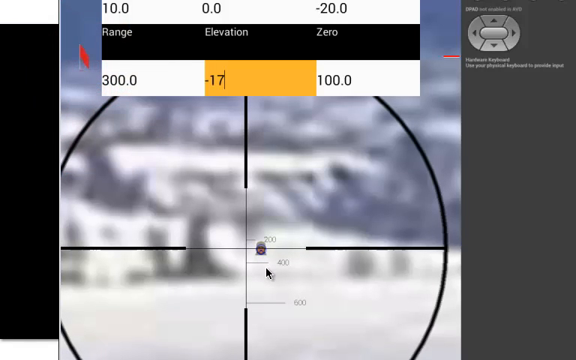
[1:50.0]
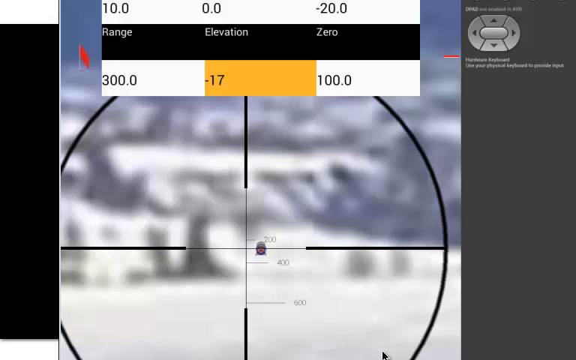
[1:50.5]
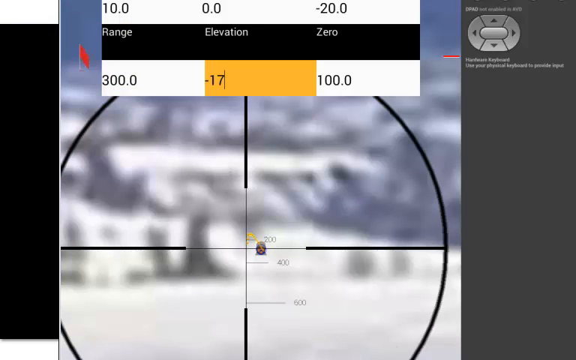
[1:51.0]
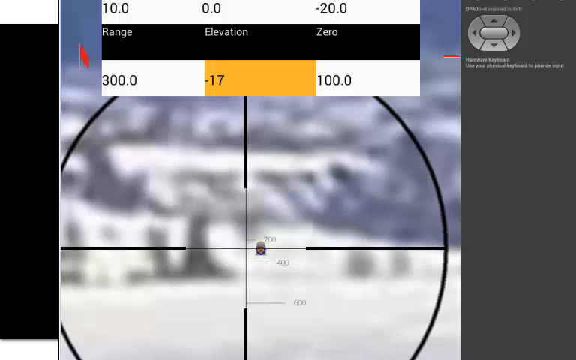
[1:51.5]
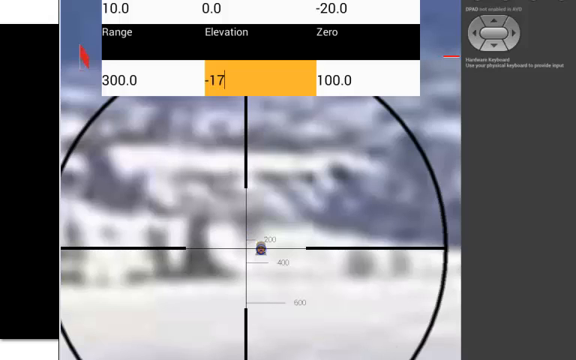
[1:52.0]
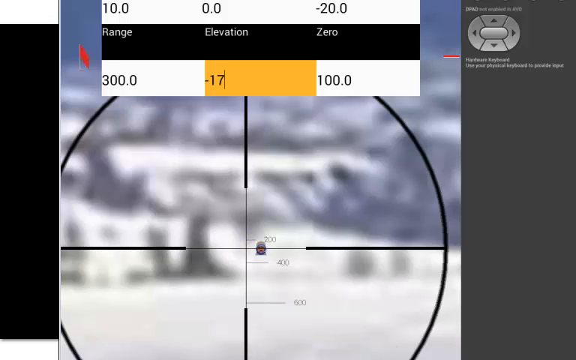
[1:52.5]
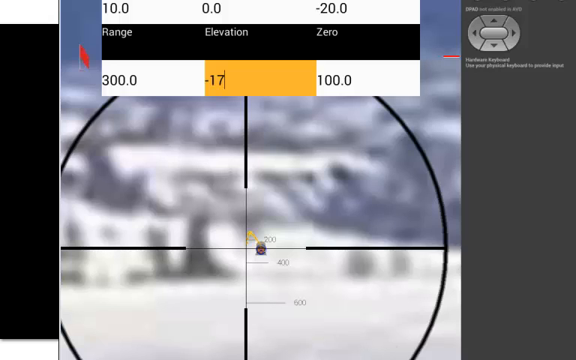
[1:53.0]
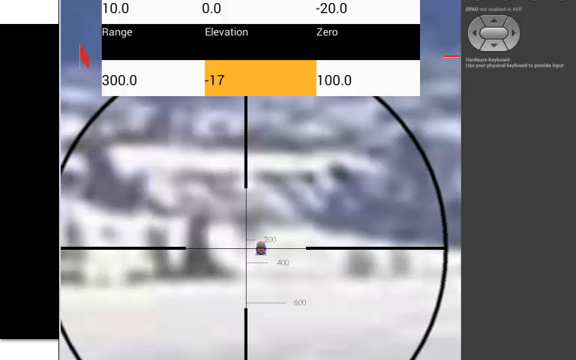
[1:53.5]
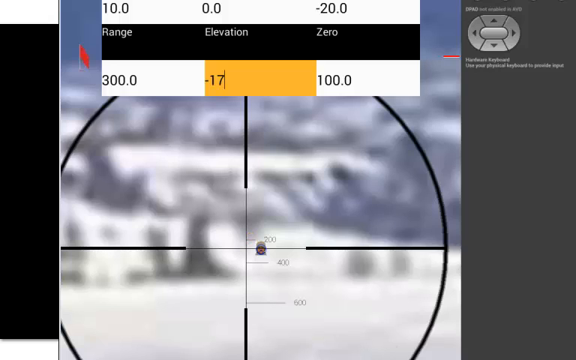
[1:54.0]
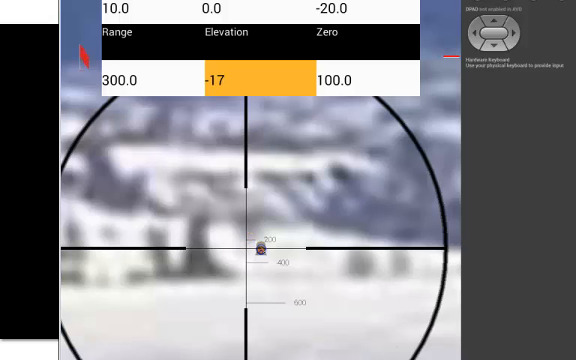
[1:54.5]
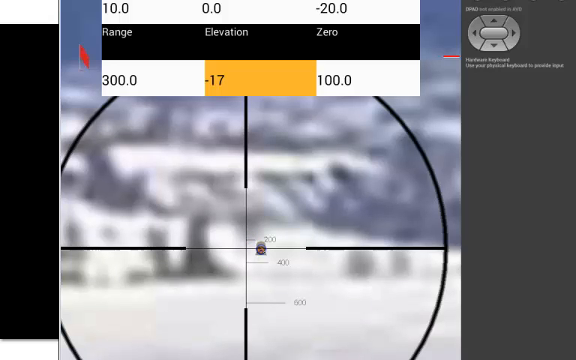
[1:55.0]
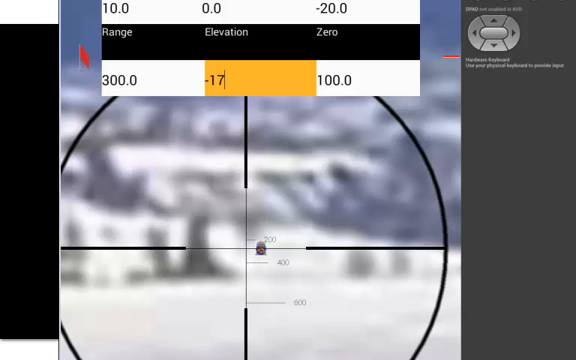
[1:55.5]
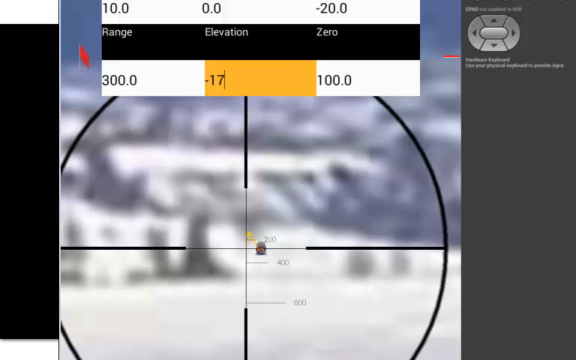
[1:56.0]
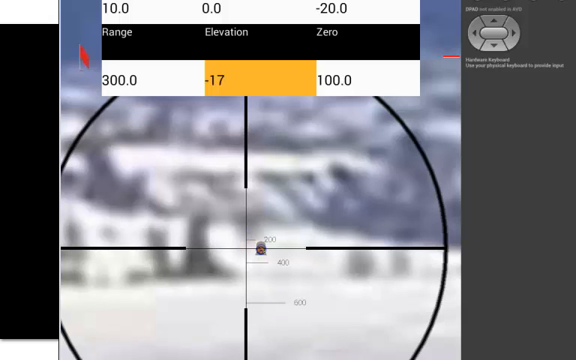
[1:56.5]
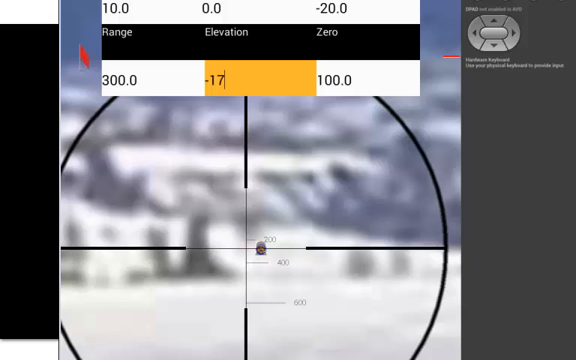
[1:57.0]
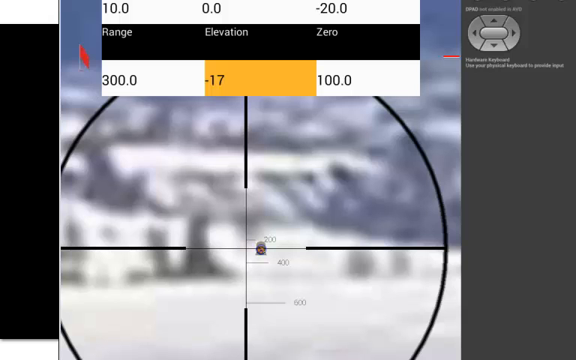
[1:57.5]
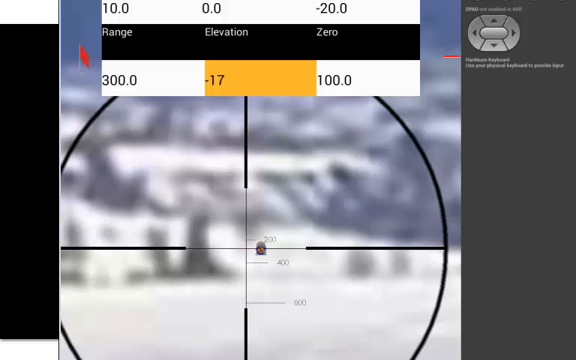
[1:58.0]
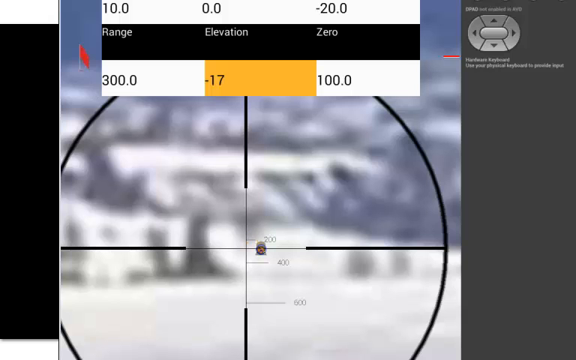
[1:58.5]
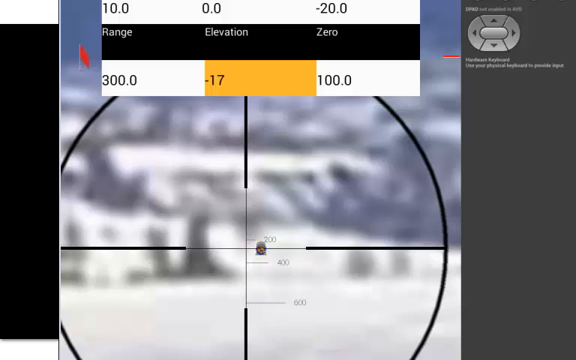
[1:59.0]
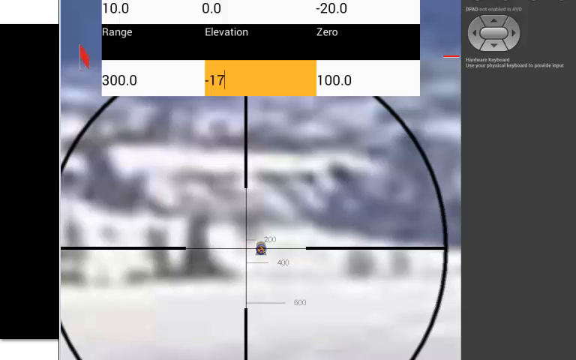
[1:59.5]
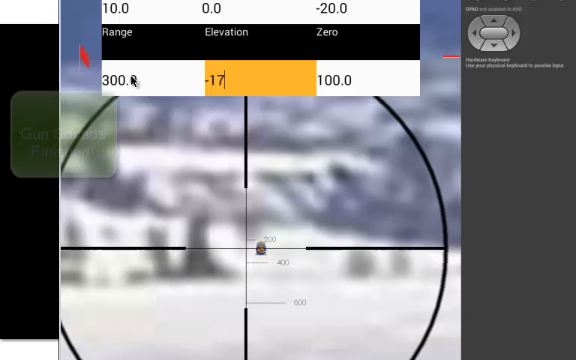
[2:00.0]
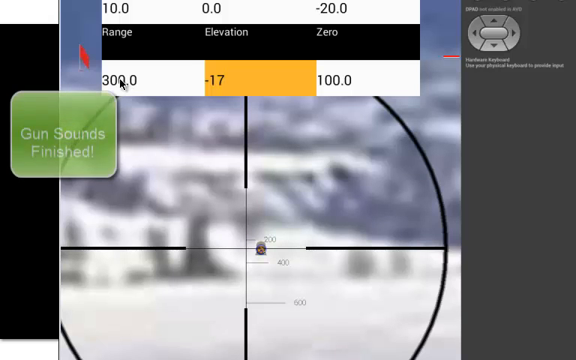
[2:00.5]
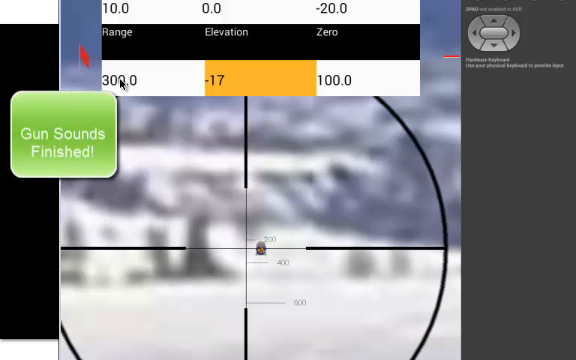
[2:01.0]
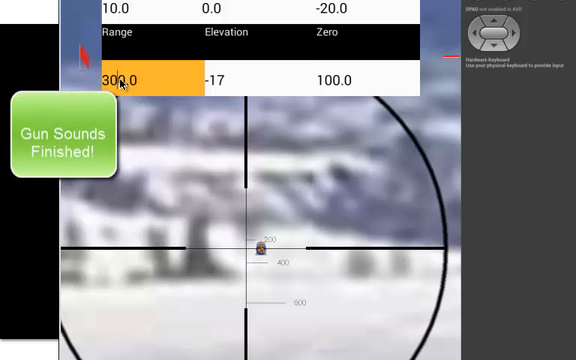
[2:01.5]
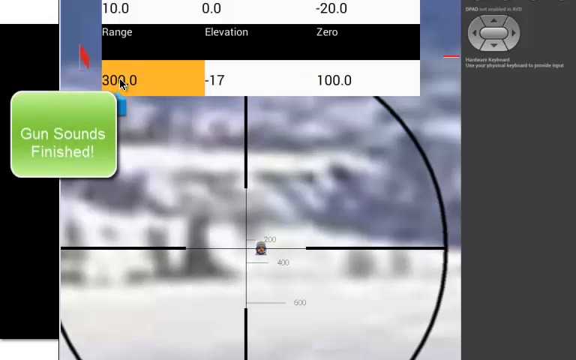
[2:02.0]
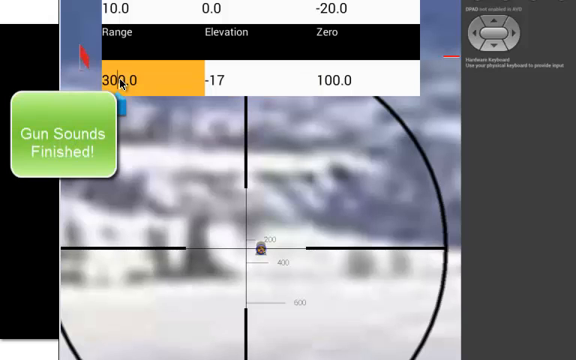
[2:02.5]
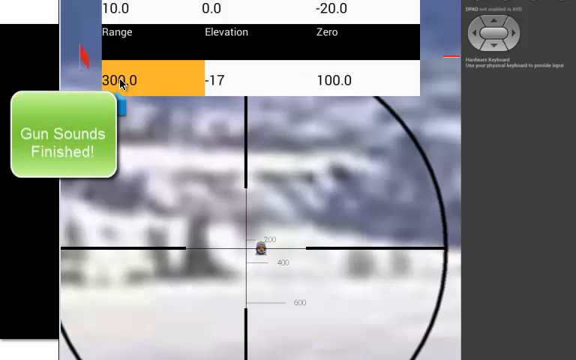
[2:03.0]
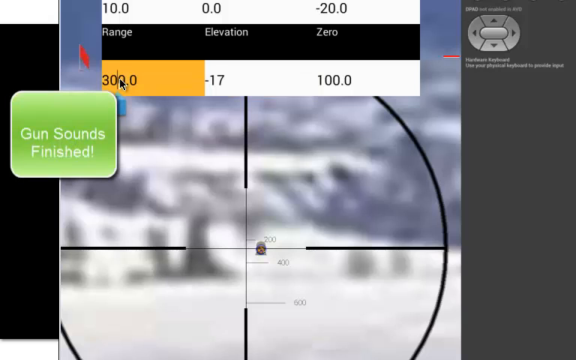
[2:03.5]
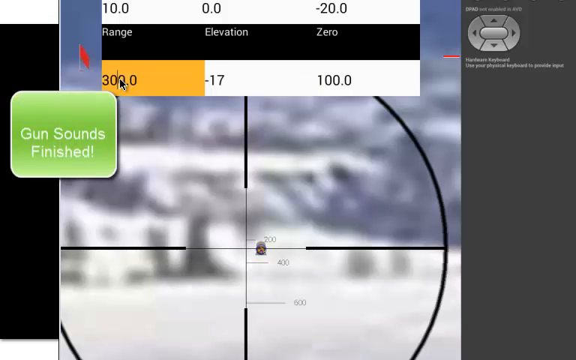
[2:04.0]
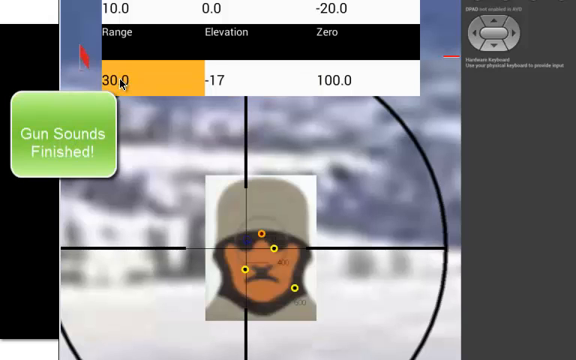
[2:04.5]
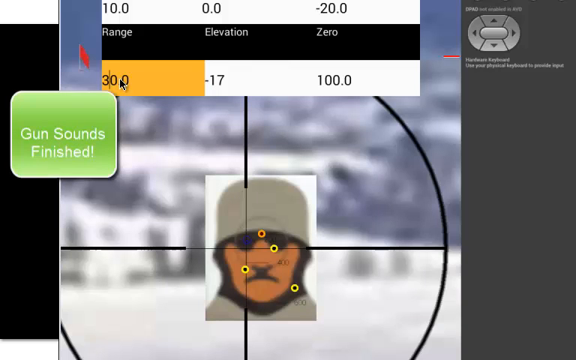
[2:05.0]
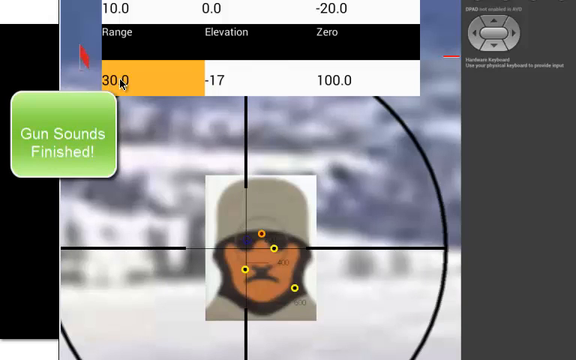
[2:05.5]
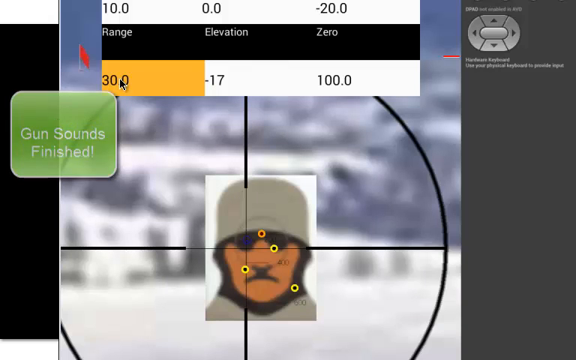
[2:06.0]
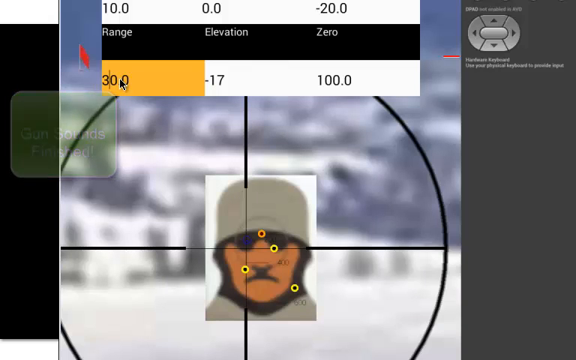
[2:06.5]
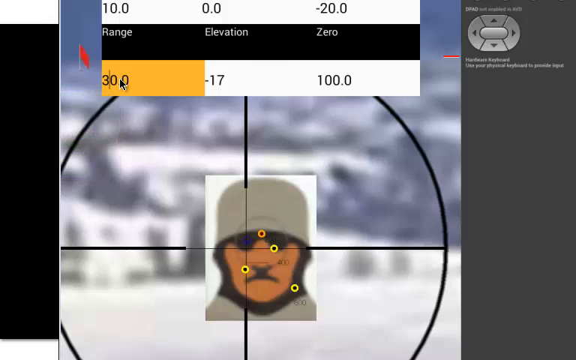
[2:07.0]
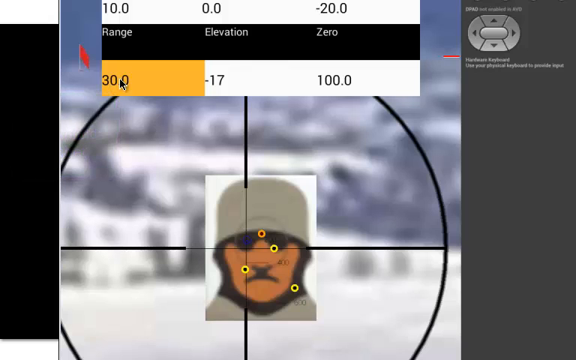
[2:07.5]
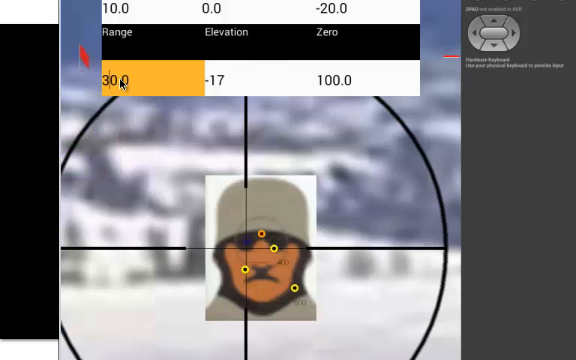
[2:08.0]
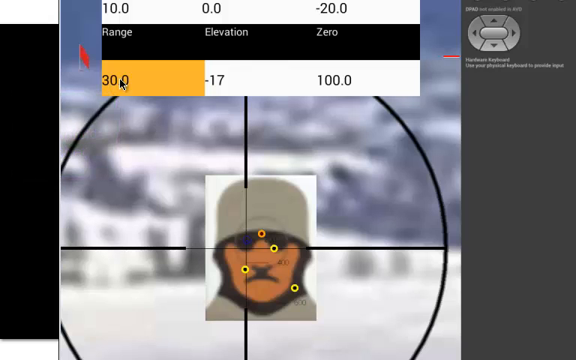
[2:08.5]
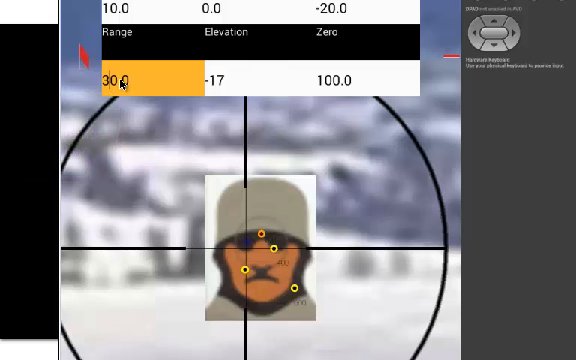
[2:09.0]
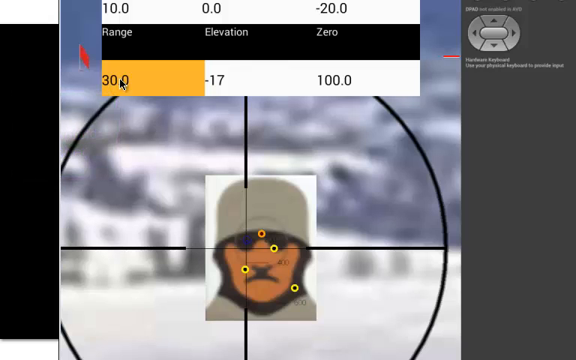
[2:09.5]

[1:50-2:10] The view is back to aiming at the target, as in a video game, with different sections in the middle of the screen. The top part is white, with black "10.0" right above the white word "range", "0.0" above the white word "elevation", and "-20.0" above the white "0". Underneath elevation it reads "-17". The mouse moves over the 300.0 underneath range, and when it is apparently clicked or hovered over, it turns orange. A green rectangle outlined in white pops up with white text reading "Gun Sounds" and underneath "Finish!", each word starting with a capital letter. Then an animated target appears and four rounds are shot.